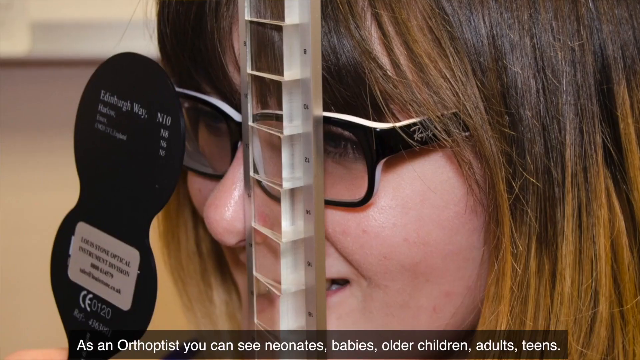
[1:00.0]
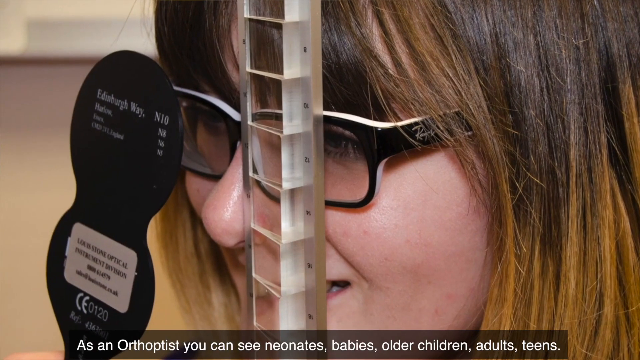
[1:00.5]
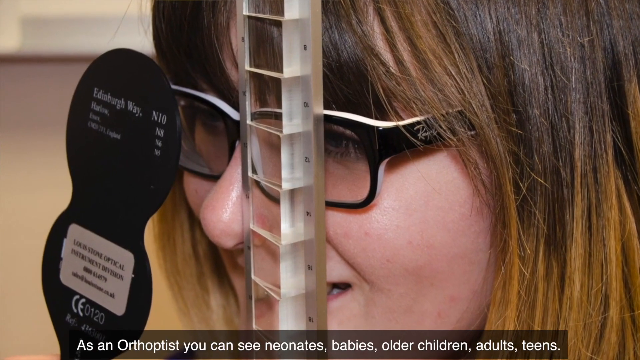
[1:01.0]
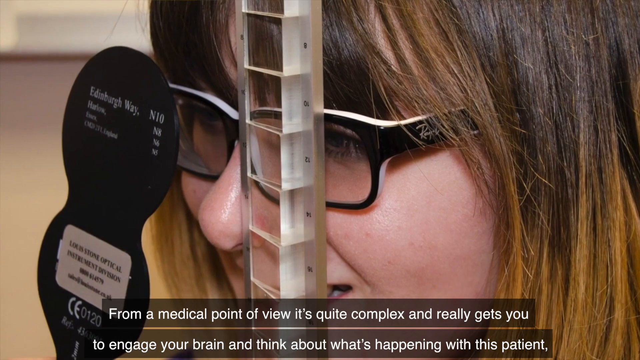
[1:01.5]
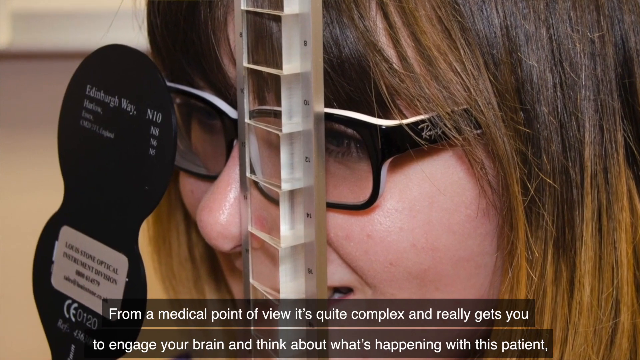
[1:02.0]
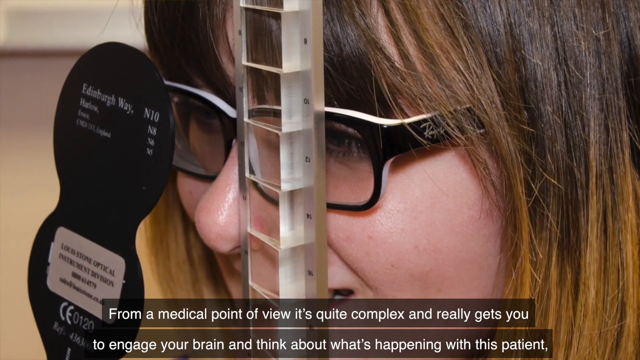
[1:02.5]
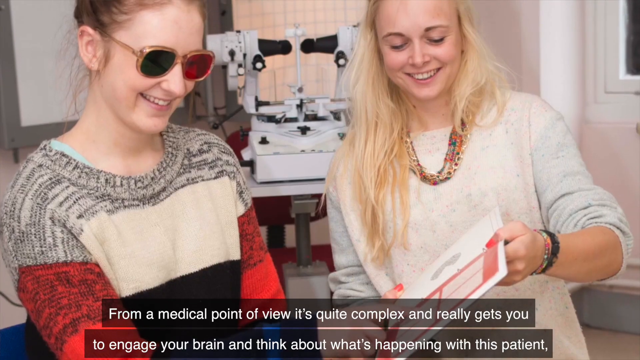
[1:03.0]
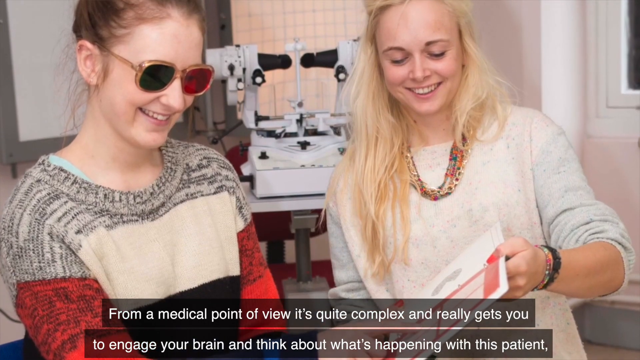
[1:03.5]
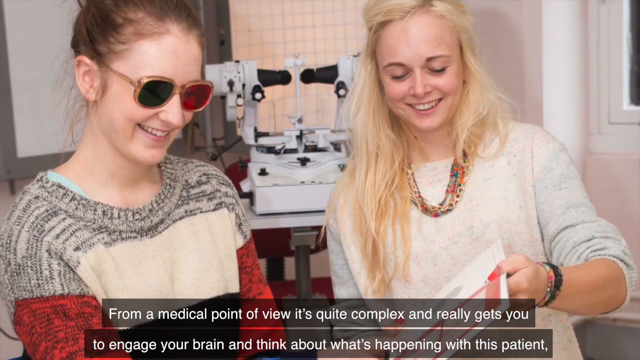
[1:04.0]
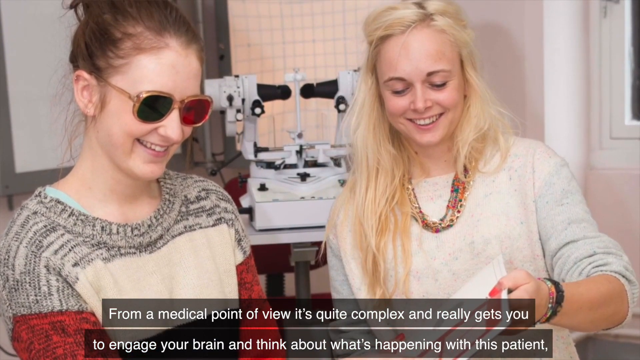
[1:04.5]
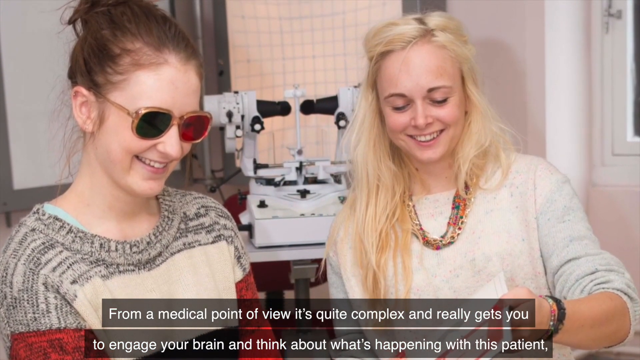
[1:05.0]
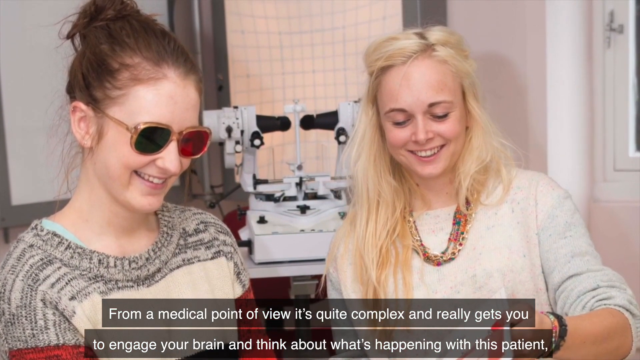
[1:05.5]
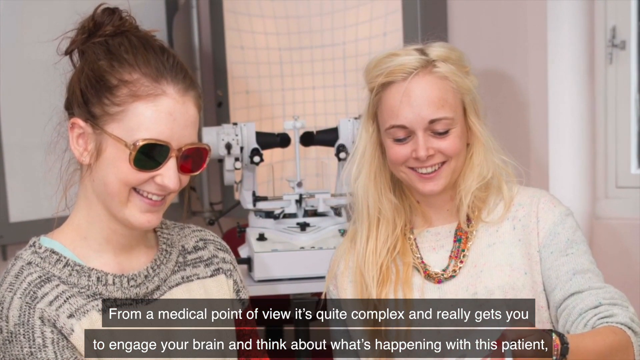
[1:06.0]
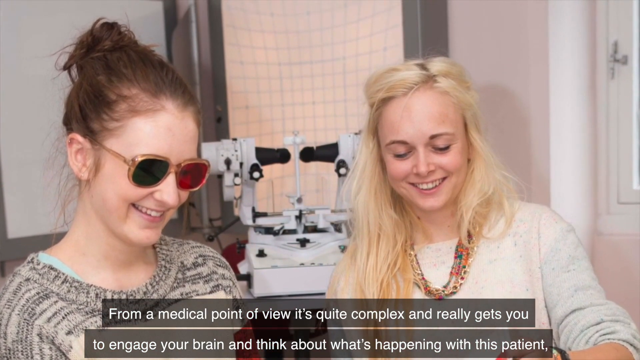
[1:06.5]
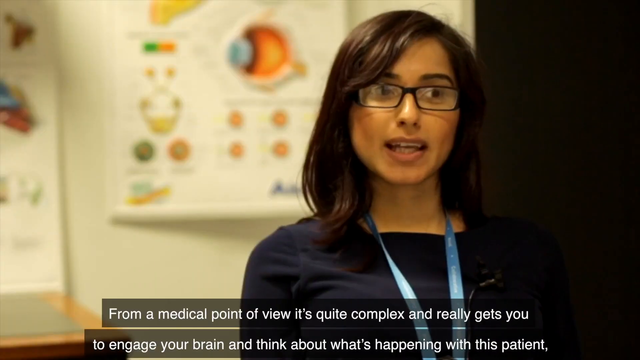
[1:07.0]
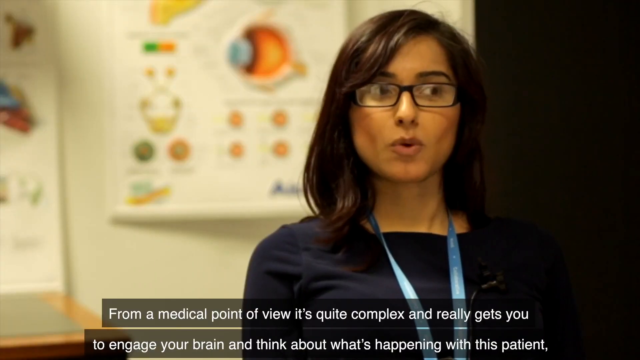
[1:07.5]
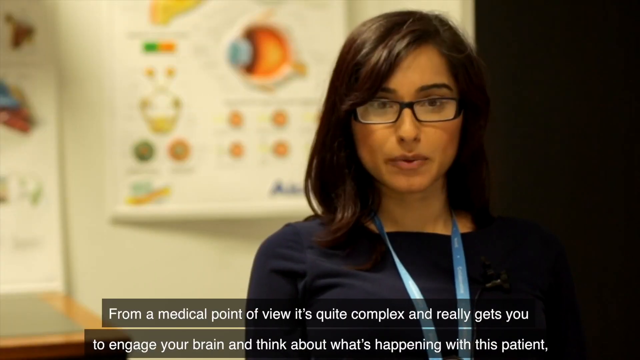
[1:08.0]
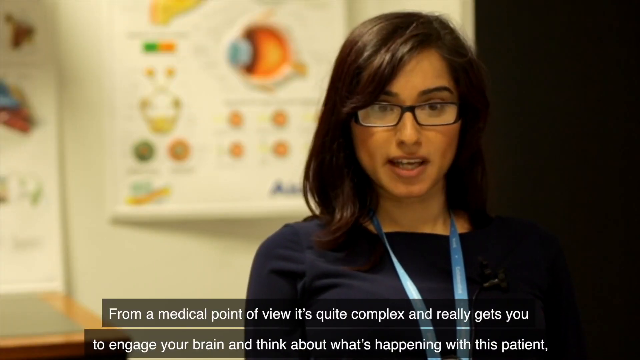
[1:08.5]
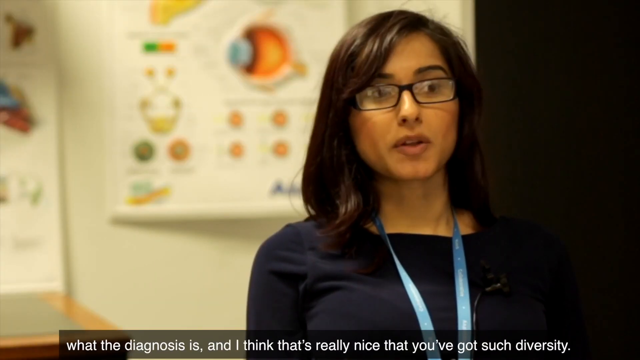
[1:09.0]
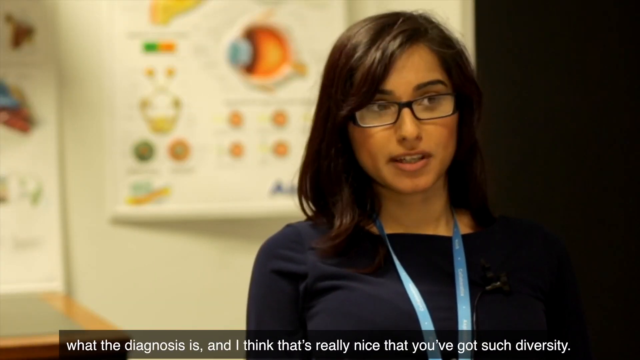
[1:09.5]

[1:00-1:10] A young girl with brownish red hair and black-rimmed glasses is shown. A tall, somewhat squared thing about an inch wide is right in front of her head, and she is looking through it with her left eye while smiling. The camera then pans into a room where a woman who looks like a nurse or maybe her mother is with her. The woman is around 30, with long blonde hair, a white sweater with the sleeves pushed up and a multi-colored beaded necklace; her head is down, looking at something she is showing the girl. The girl is a teenager of around 14 to 15, with reddish brown hair pulled up into a little bun or ponytail. She wears sunglasses and a multi-colored sweater that is kind of gray at the top, then beige and red, and she is smiling. They look at a paper, smiling and laughing. The dark-haired female doctor is then shown talking again.